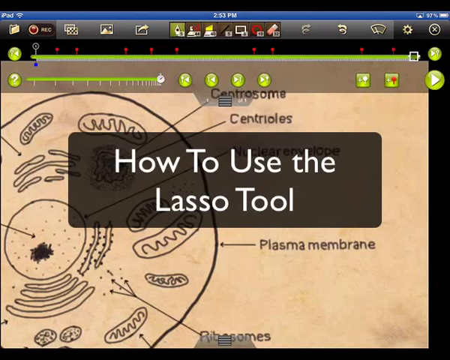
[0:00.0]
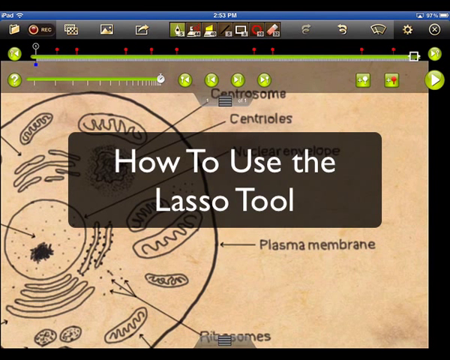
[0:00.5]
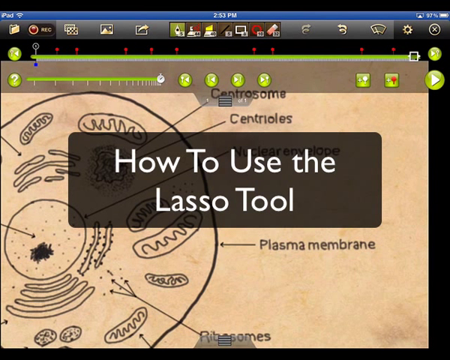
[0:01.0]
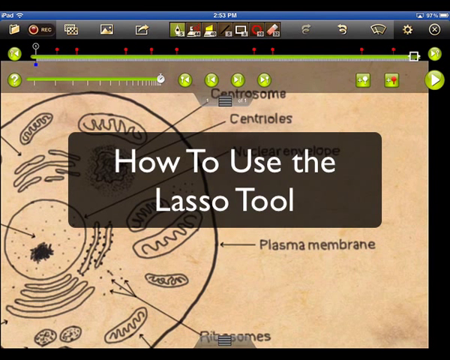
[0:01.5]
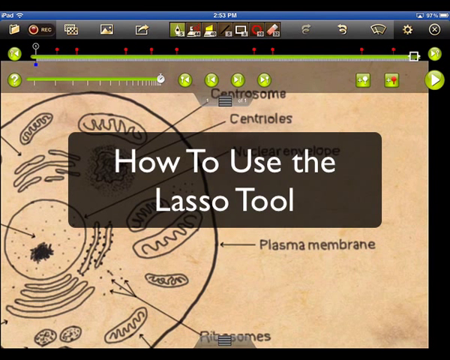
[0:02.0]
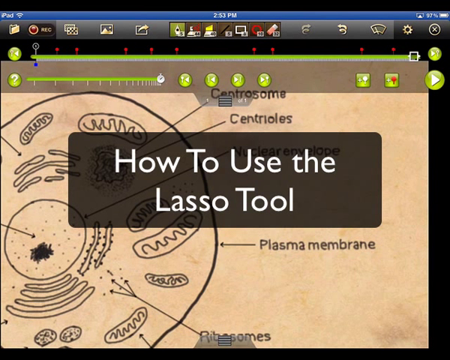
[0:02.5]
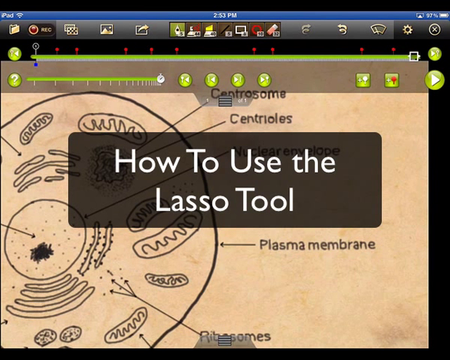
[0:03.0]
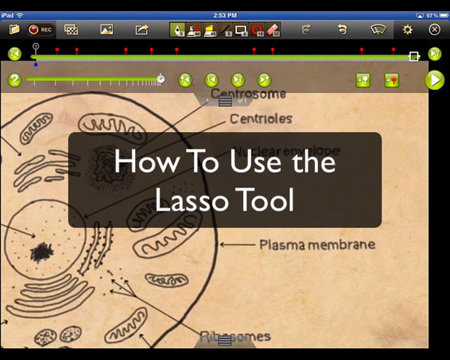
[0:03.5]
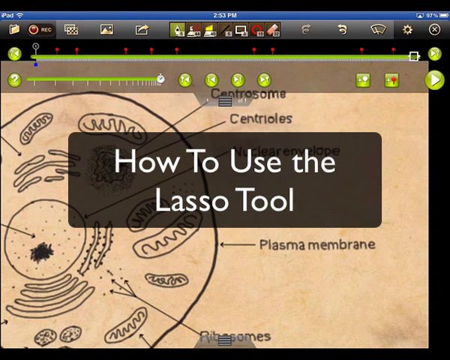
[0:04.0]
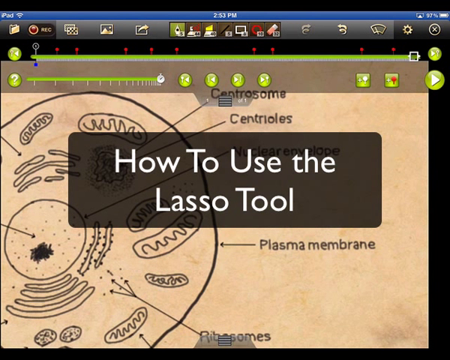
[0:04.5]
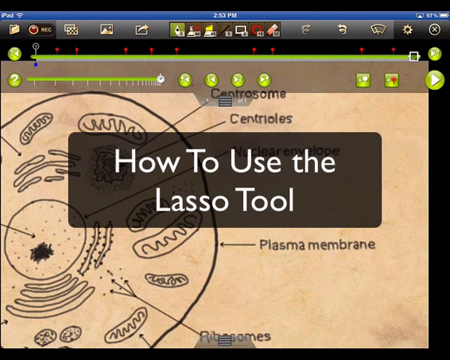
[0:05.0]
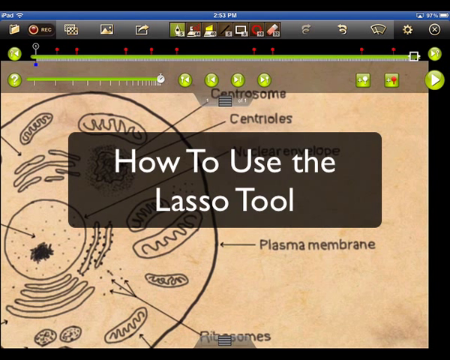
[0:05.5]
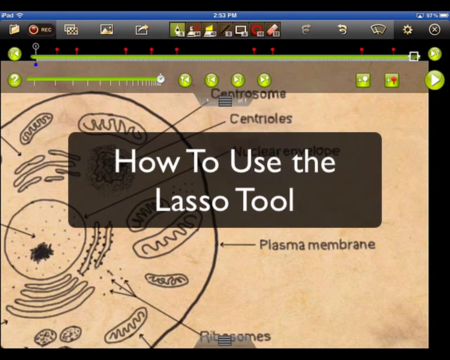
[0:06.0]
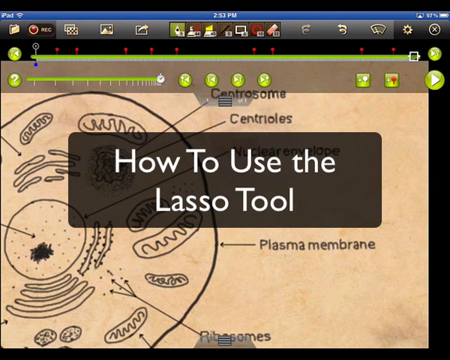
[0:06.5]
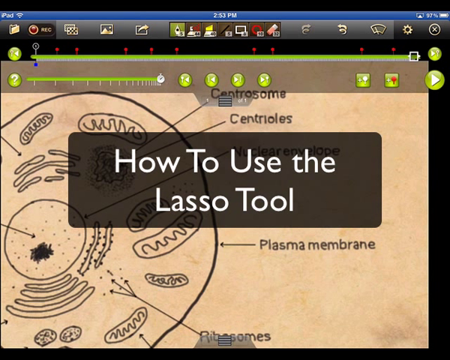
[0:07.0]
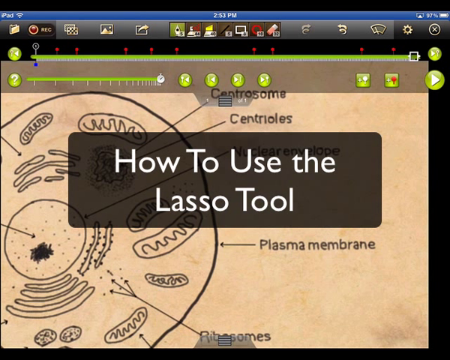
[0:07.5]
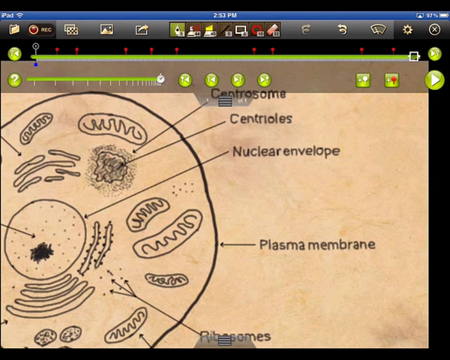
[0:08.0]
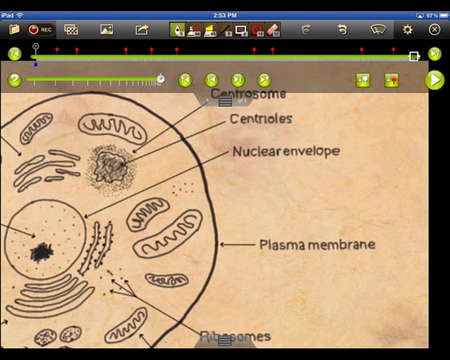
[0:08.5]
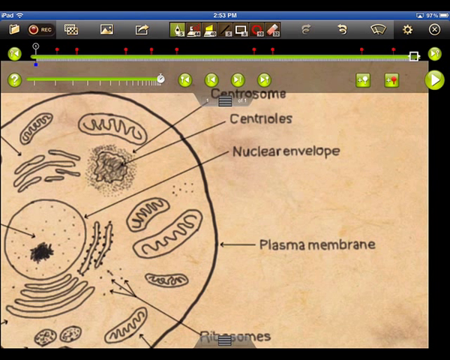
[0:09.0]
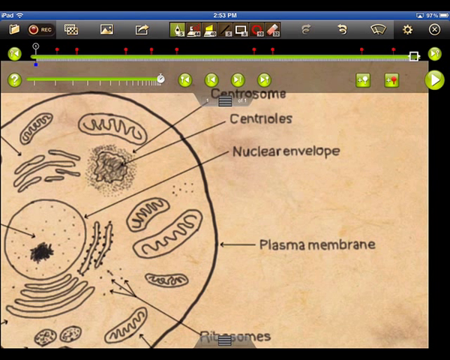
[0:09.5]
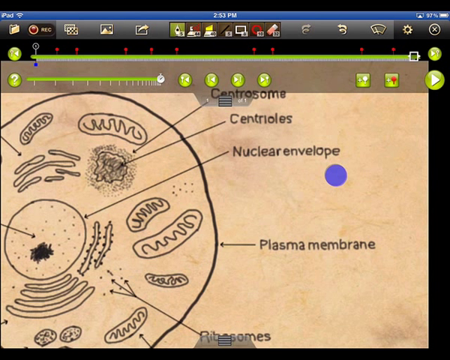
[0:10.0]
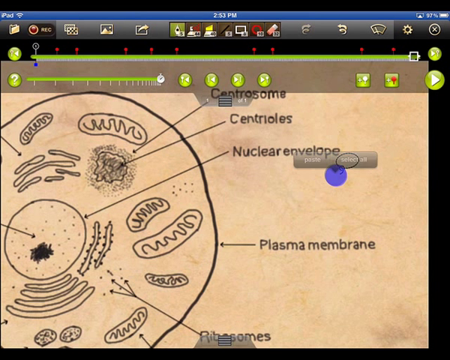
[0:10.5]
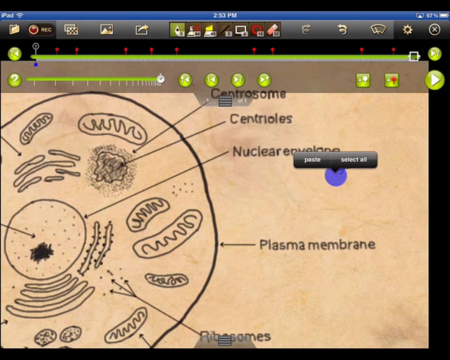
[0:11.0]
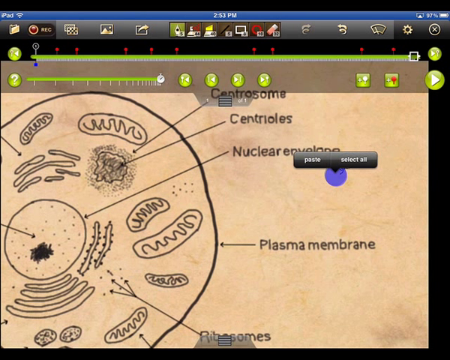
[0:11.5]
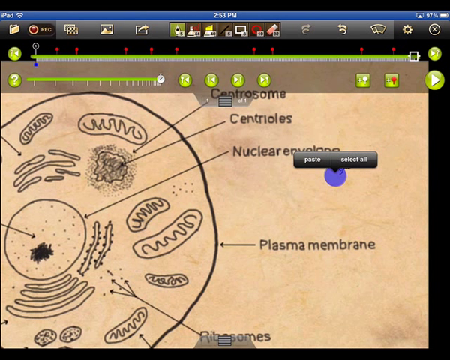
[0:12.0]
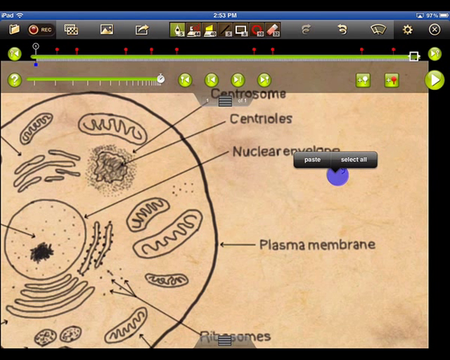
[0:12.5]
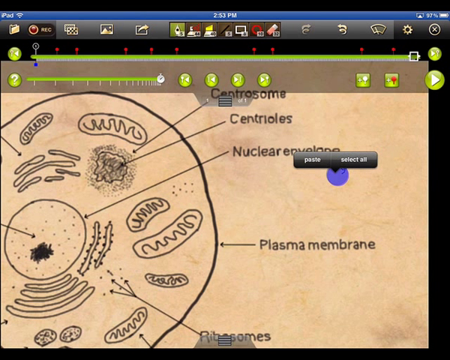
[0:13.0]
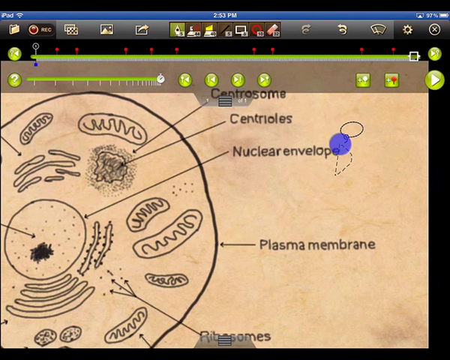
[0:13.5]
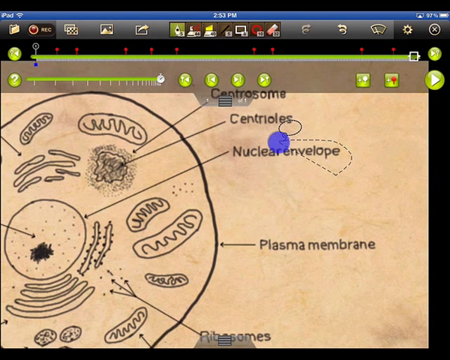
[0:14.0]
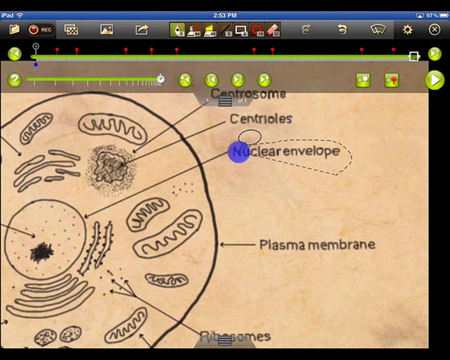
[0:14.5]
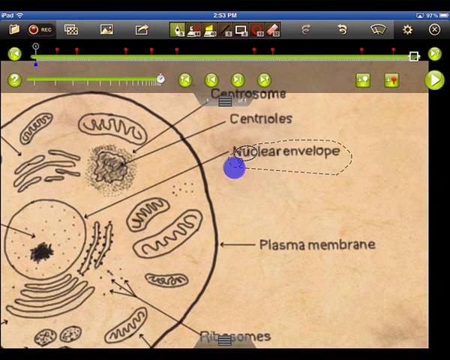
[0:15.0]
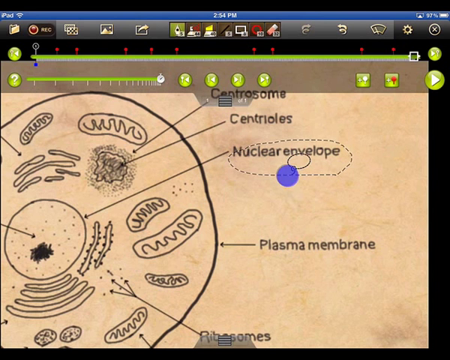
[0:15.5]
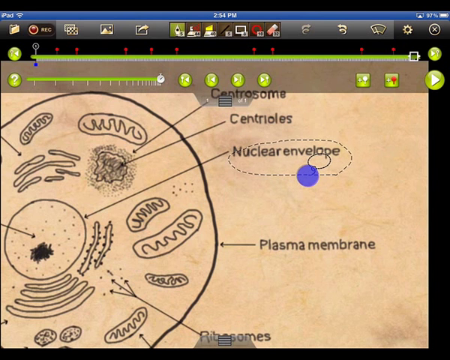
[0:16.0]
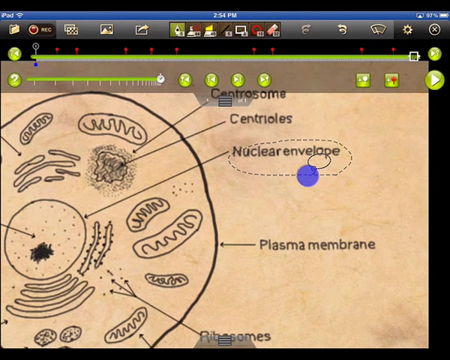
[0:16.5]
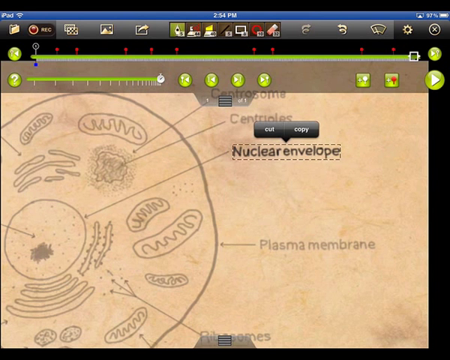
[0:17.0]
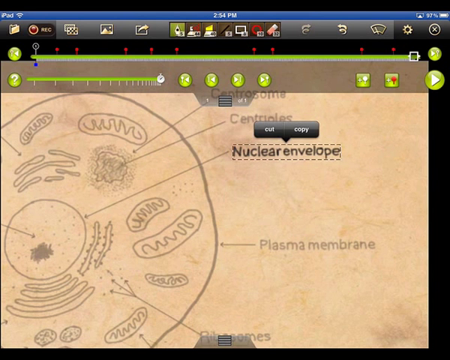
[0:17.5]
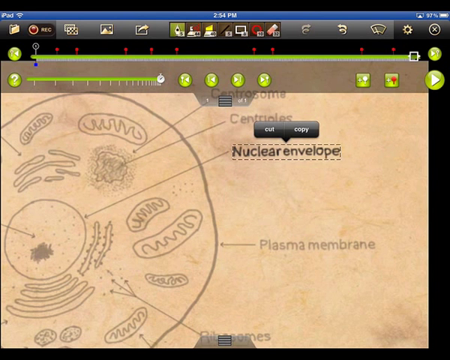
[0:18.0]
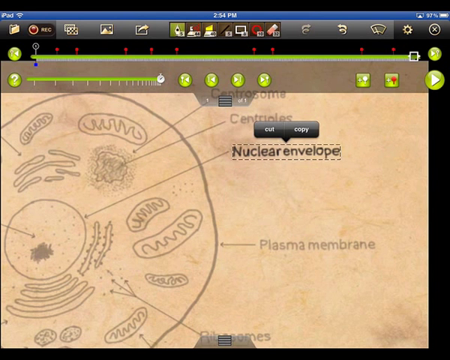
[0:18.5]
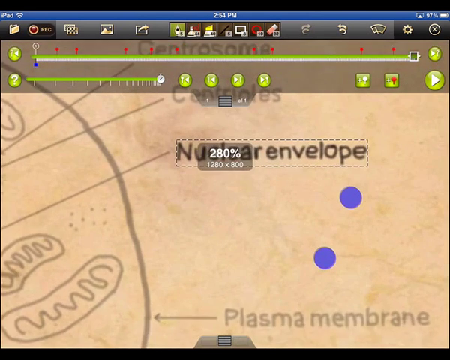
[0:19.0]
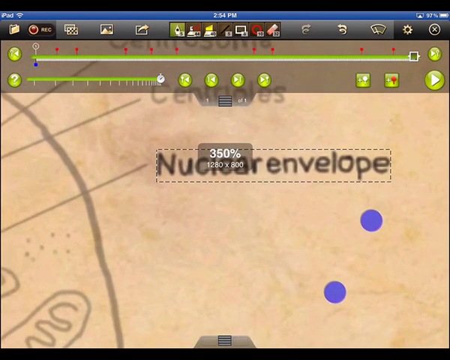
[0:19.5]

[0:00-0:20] A cellular biology diagram, presented in a simple and clear format, is labelled with various components, including the nucleus and the ribosomes. The video demonstrates how to use the lasso tool. Labels on the diagram include the centrosome, the centrioles, the nuclear envelope, the plasma membrane and ribosomes. The focus is on the nuclear envelope: it is circled, cut and copied, and the view is zoomed to 350%. Tools are on top of the diagram, in different colours such as green, brown, black and white.